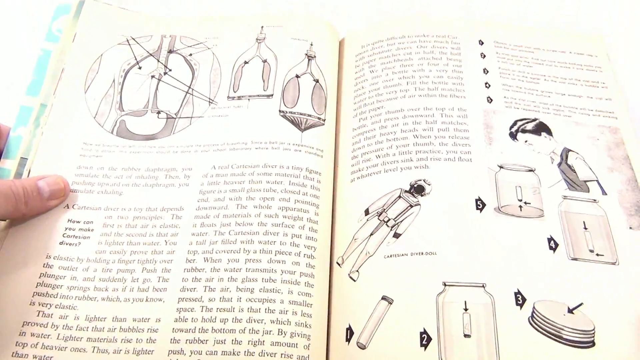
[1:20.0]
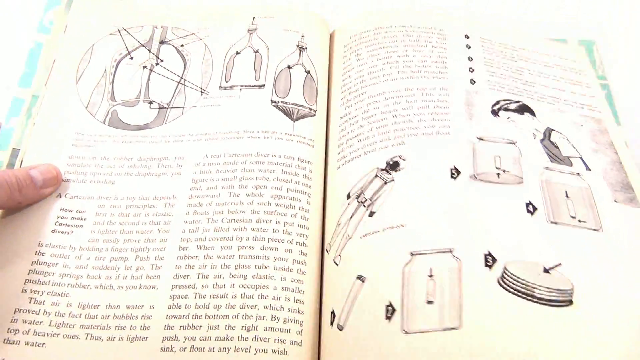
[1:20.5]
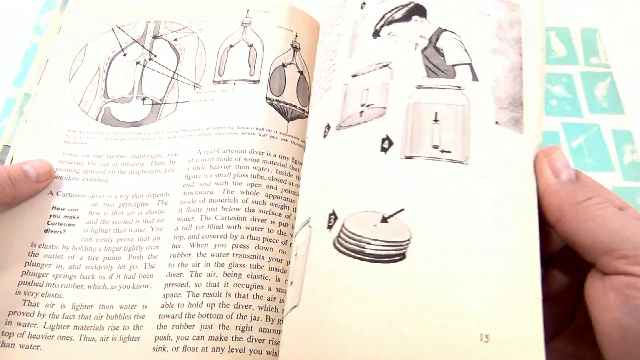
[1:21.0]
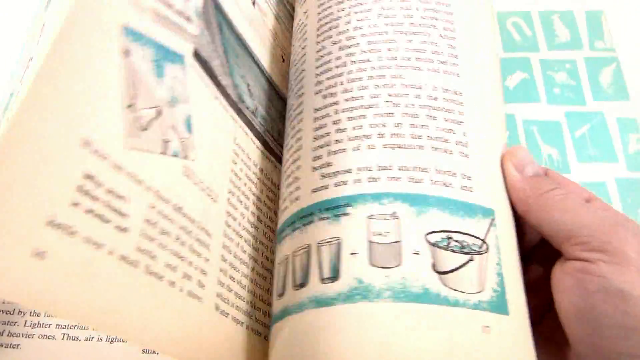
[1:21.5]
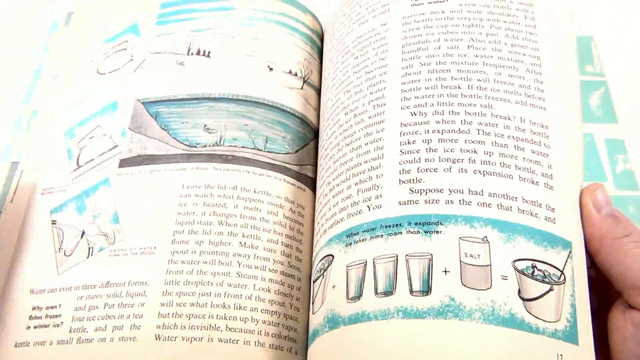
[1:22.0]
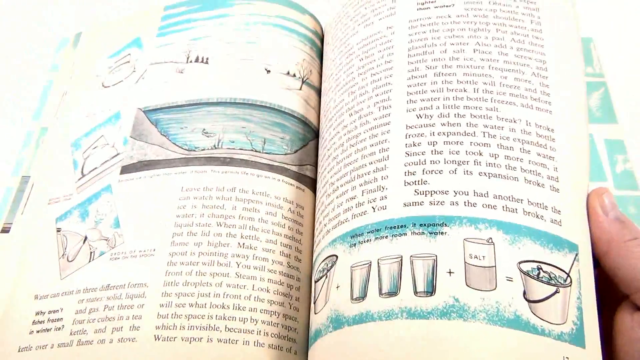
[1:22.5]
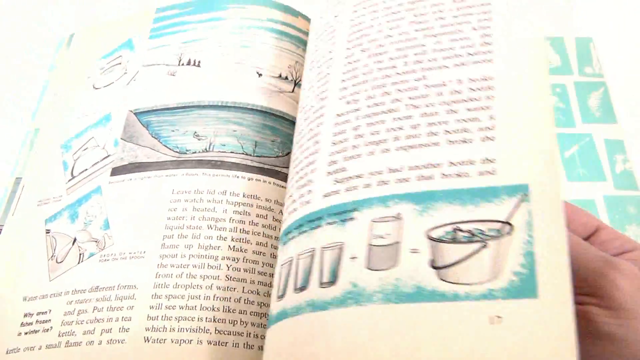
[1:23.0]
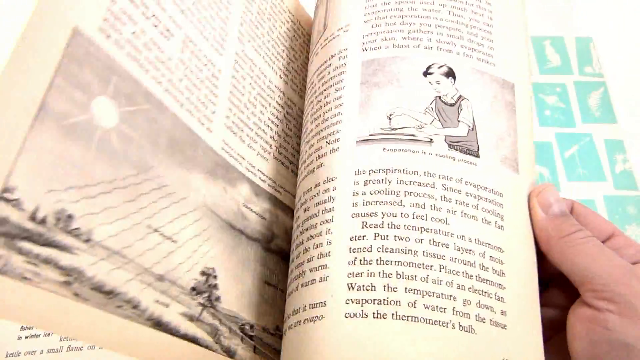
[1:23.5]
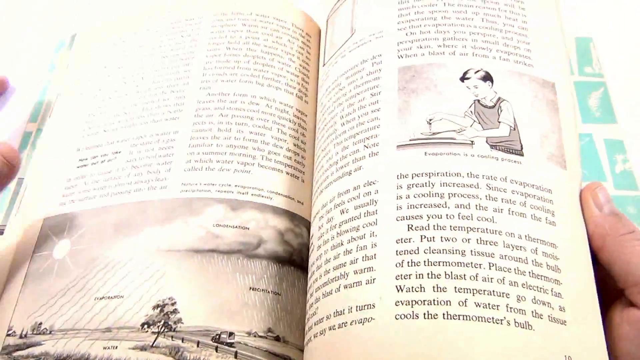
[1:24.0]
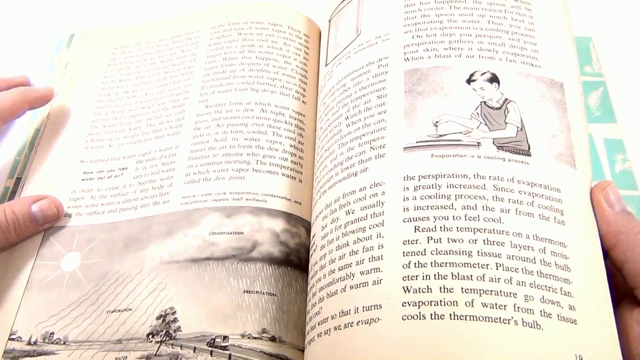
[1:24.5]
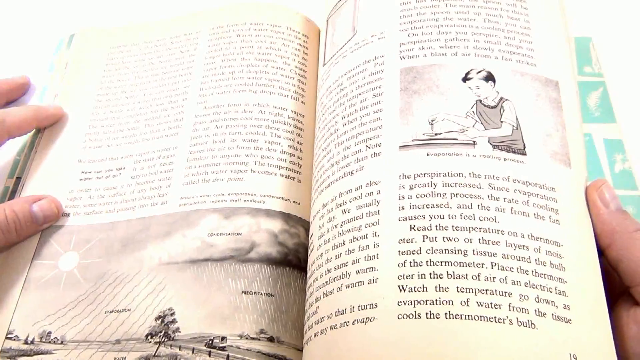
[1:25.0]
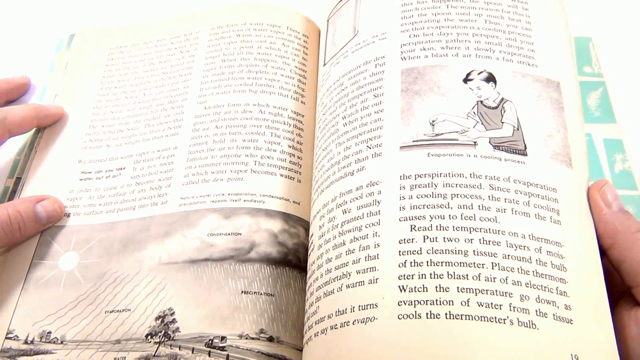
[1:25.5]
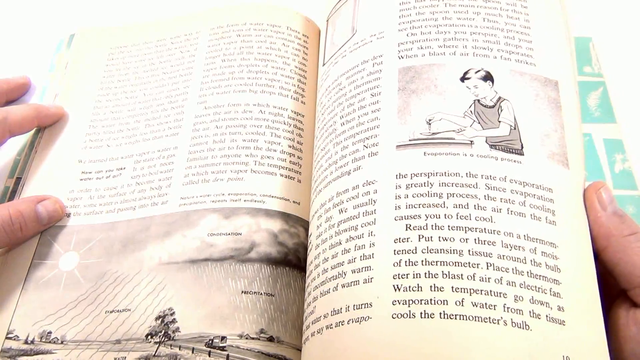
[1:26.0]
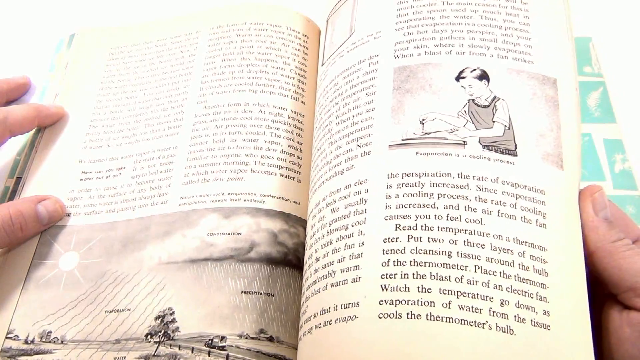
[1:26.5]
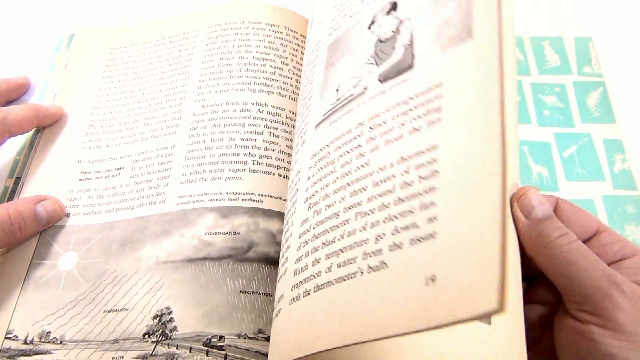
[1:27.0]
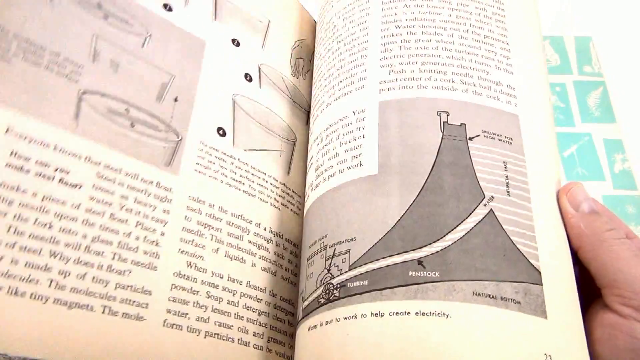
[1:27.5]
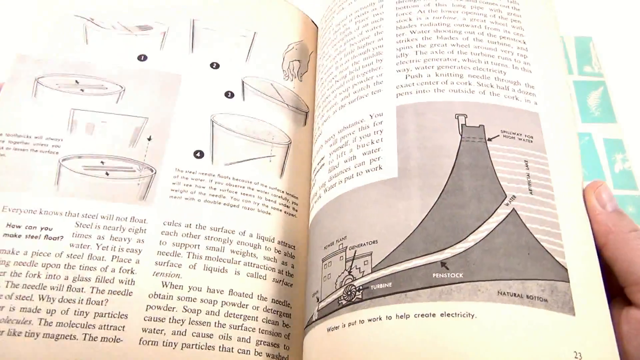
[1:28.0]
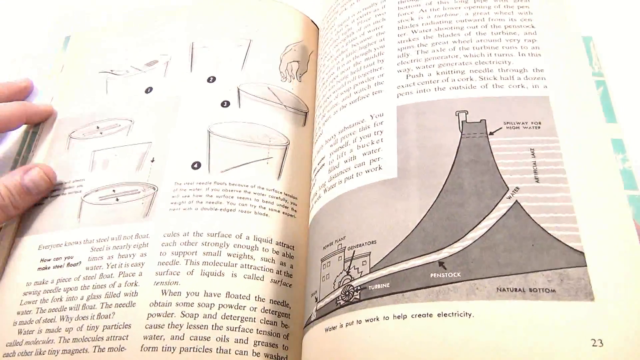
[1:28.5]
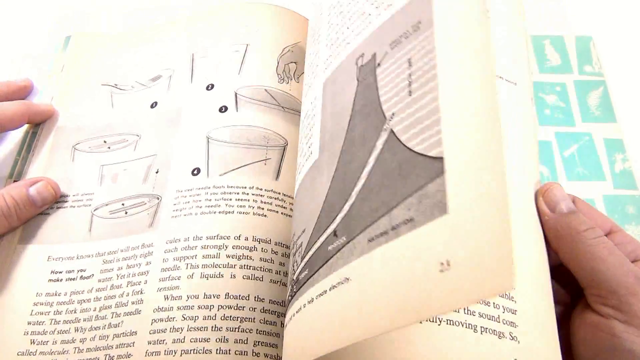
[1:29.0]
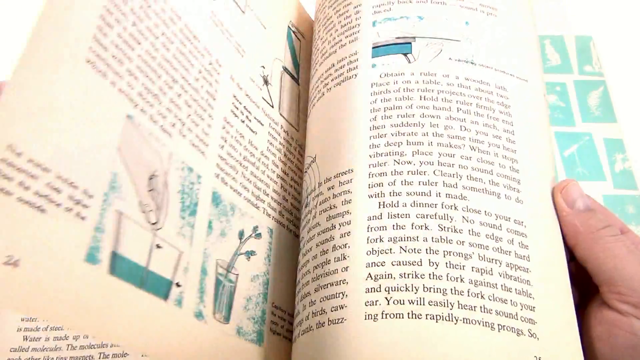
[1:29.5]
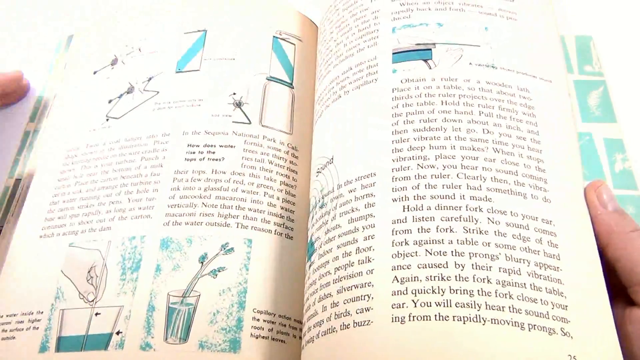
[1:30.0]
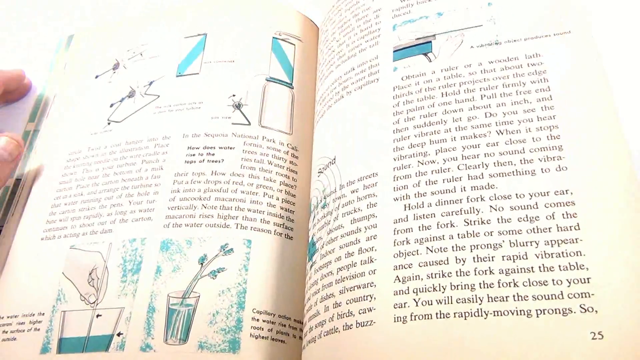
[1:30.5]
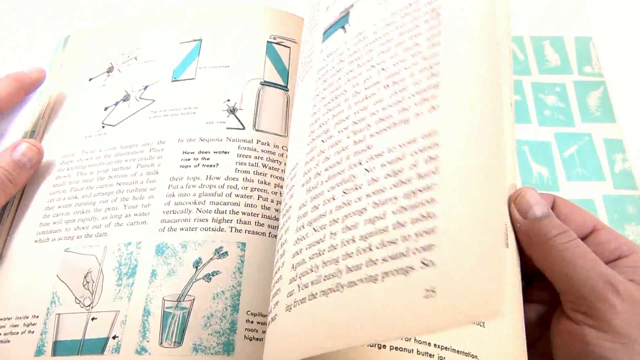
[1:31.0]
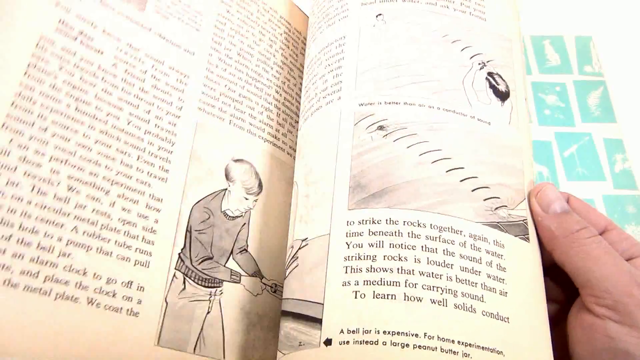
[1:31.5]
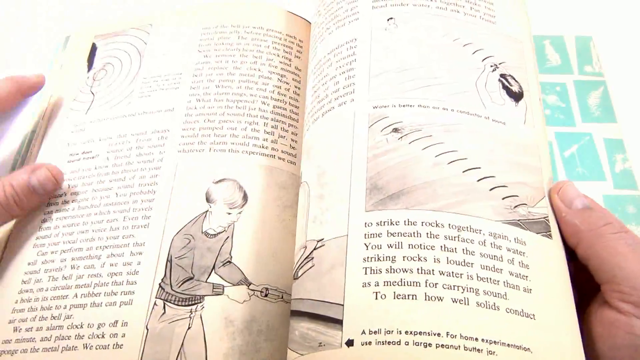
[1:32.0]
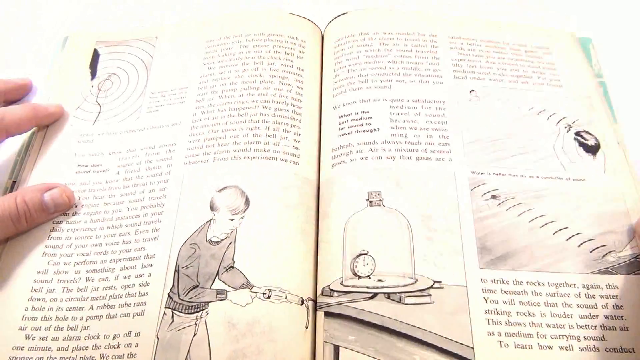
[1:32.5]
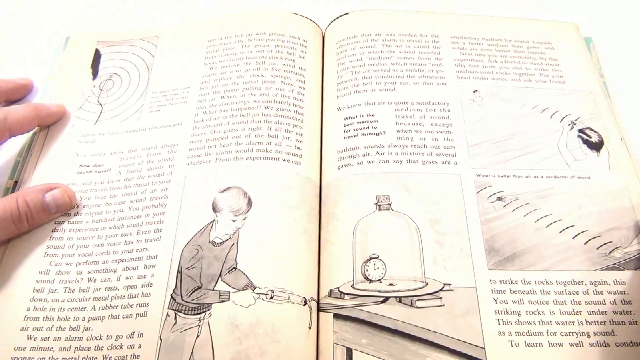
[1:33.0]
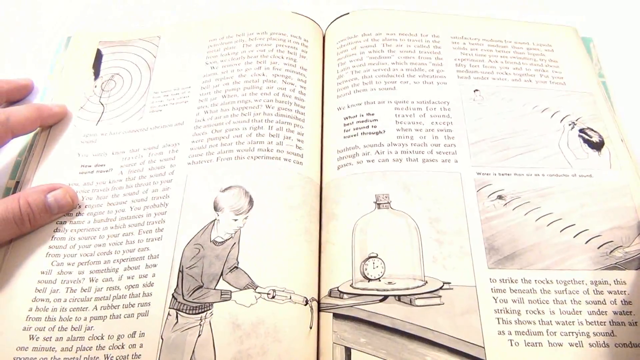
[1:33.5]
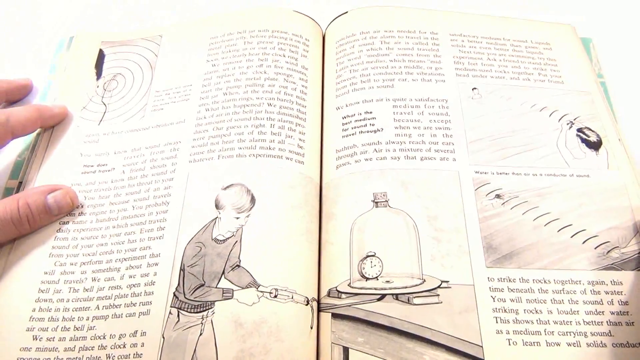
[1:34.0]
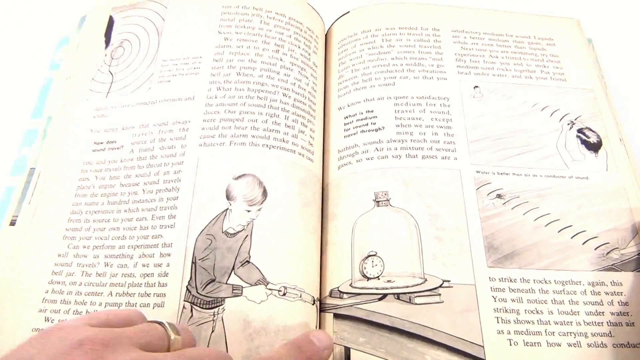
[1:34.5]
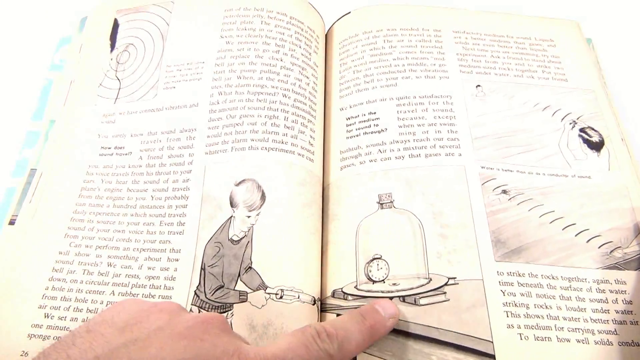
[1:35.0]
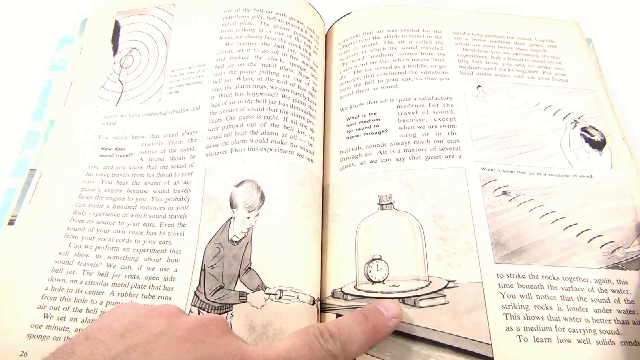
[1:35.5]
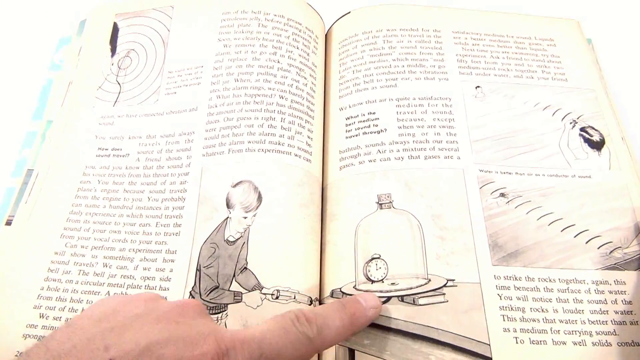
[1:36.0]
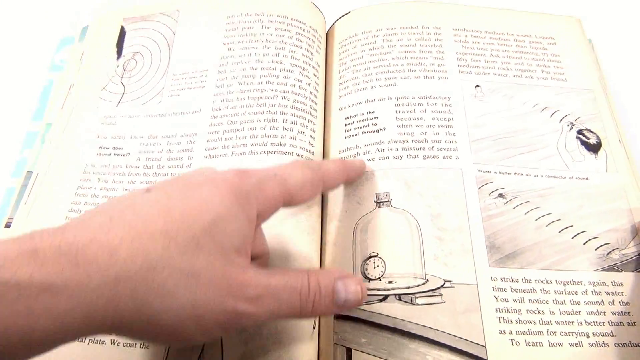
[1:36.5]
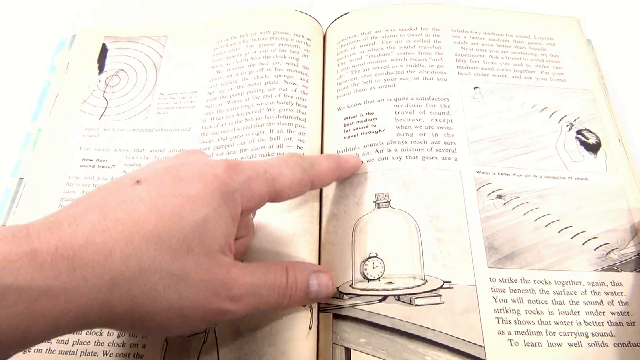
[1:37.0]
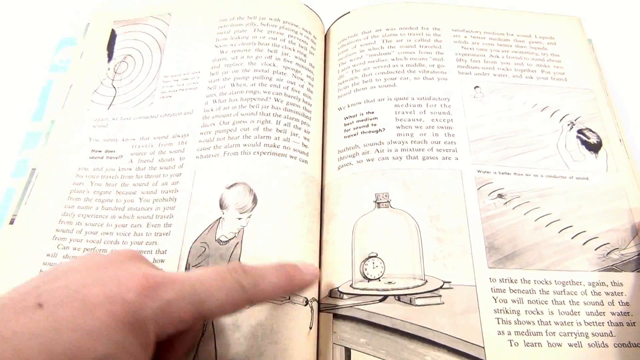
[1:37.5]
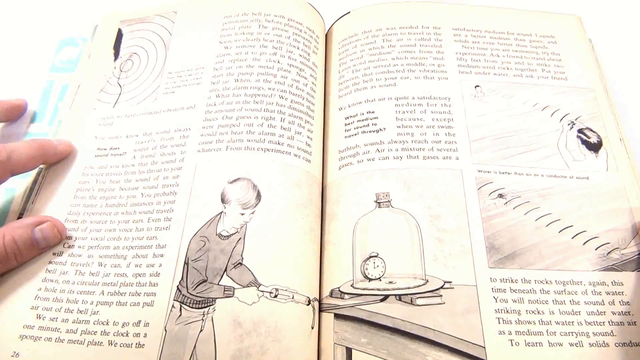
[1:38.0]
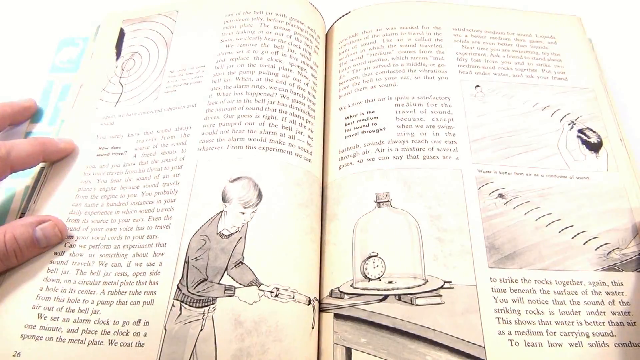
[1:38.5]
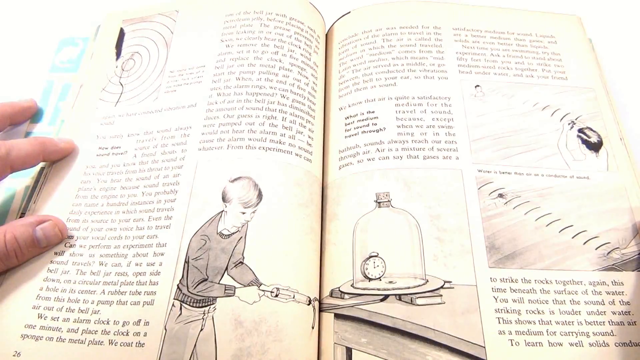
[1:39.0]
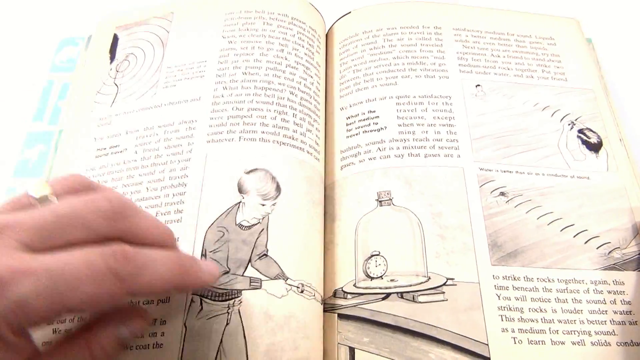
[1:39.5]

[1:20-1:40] The open book appears to show the insides of a human body, with one picture appearing to show the lungs. A third picture at the top looks like it shows the lungs as two balloons. On the right side of the page is what looks like an astronaut leaning over to the right, and a boy, who appears to be white with black hair, looking into two large jars with something inside them. There is a lot of writing on both pages. The person holding the pamphlet flips through pages of pictures and writing, including more blue and black pictures. He lands on a page with a boy holding some type of device, and a finger points to a picture in the center of a clock under some piece of glass.